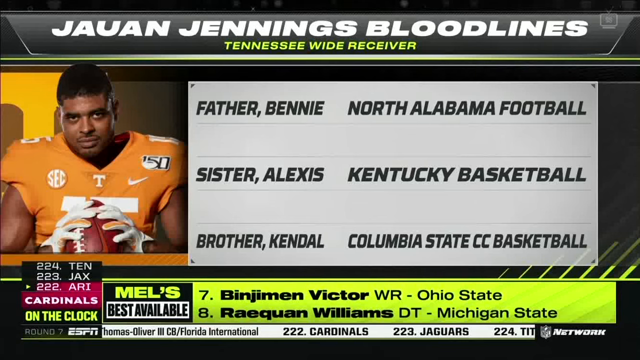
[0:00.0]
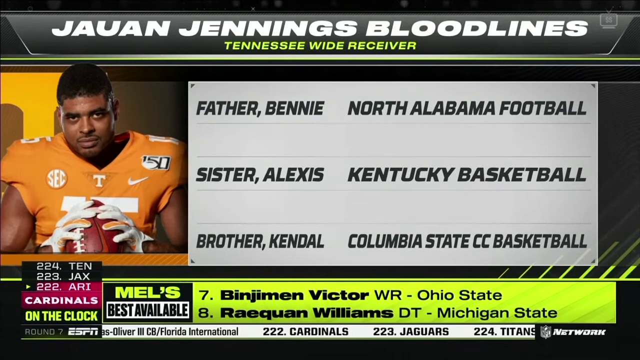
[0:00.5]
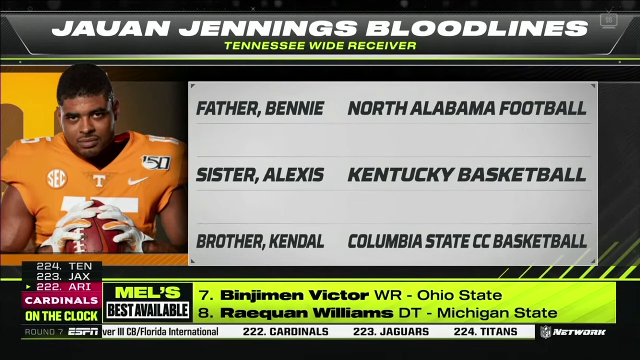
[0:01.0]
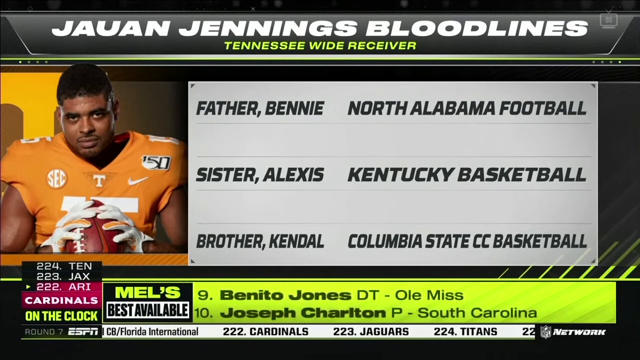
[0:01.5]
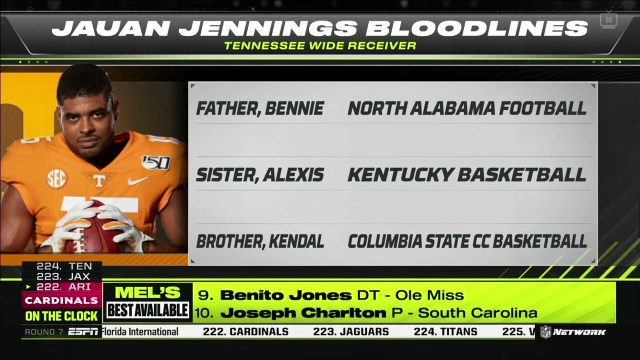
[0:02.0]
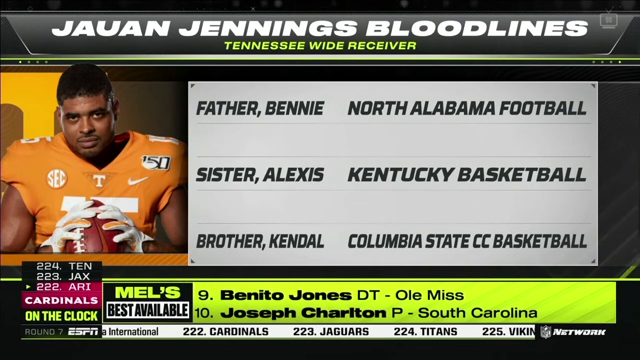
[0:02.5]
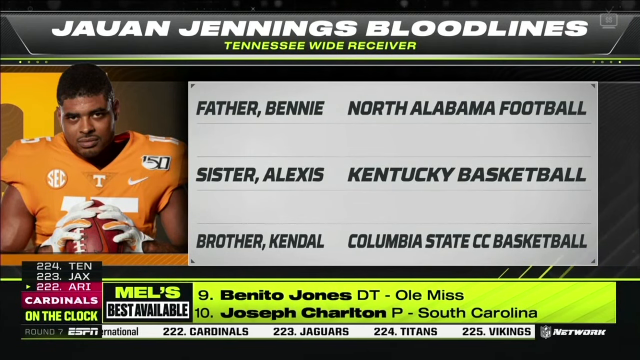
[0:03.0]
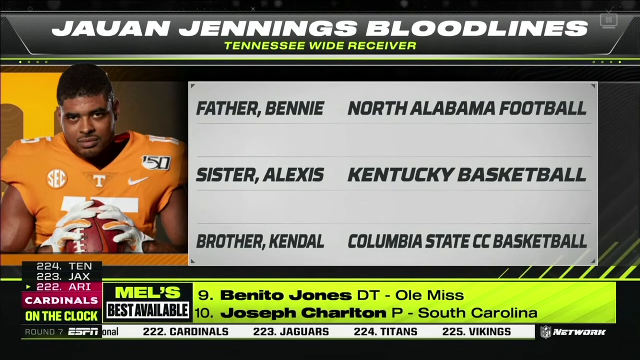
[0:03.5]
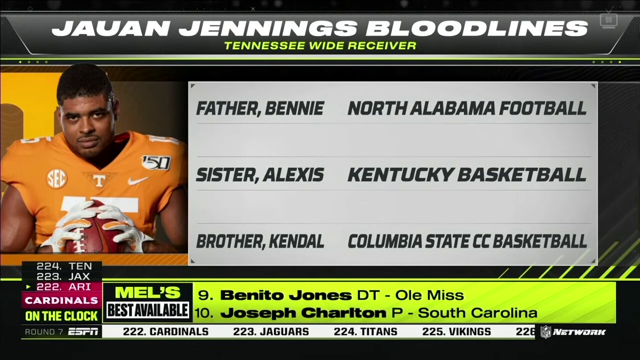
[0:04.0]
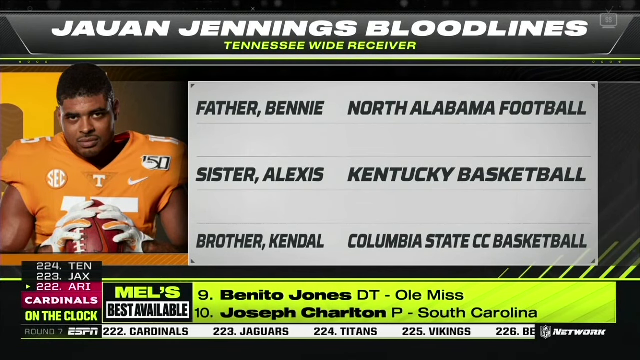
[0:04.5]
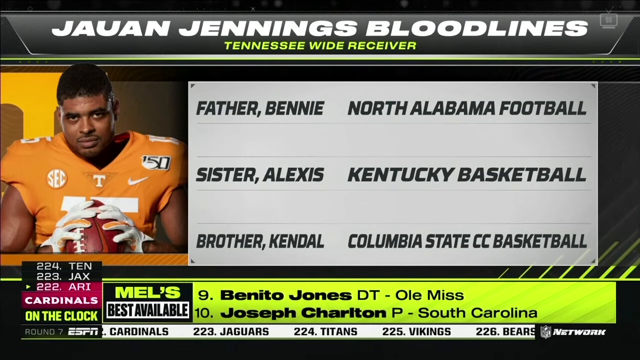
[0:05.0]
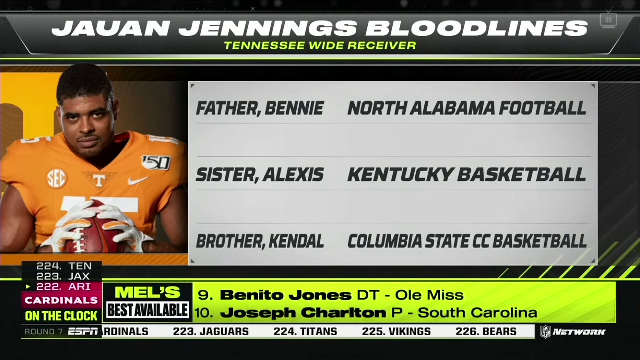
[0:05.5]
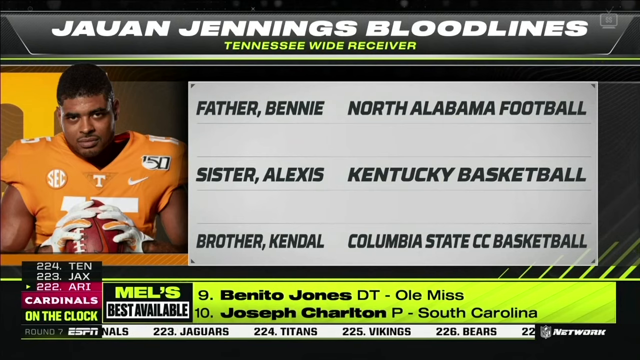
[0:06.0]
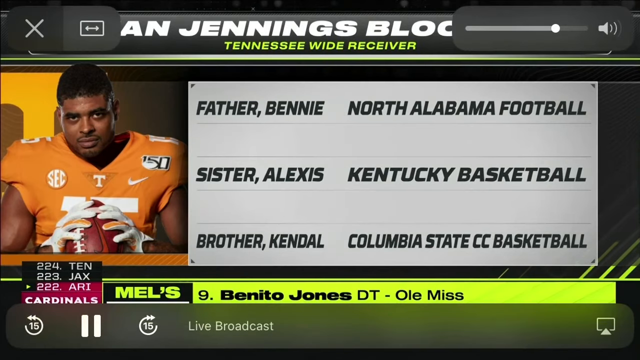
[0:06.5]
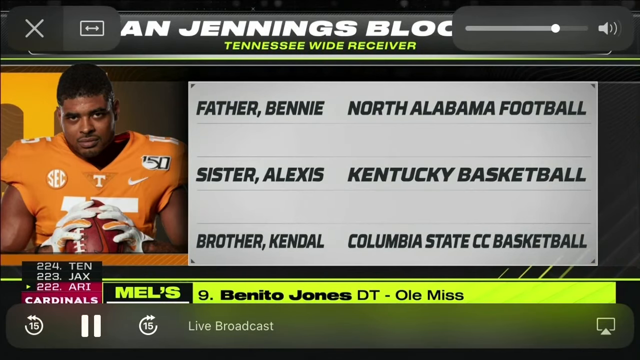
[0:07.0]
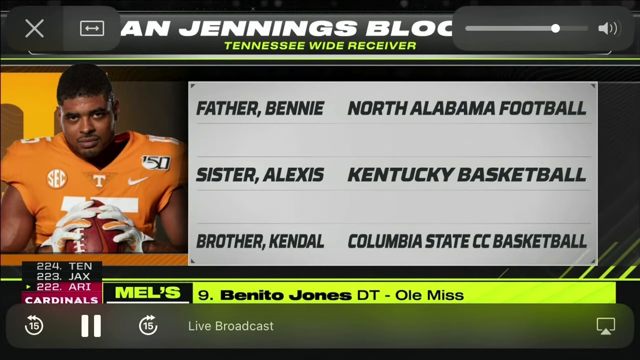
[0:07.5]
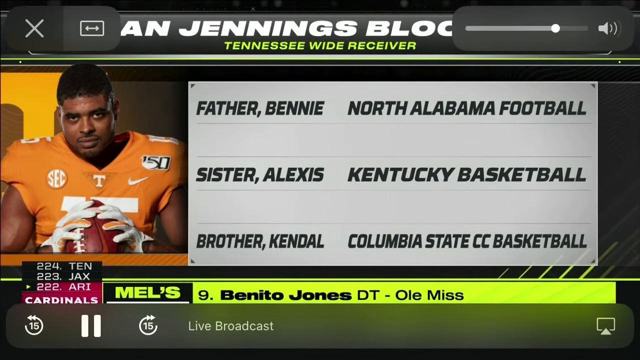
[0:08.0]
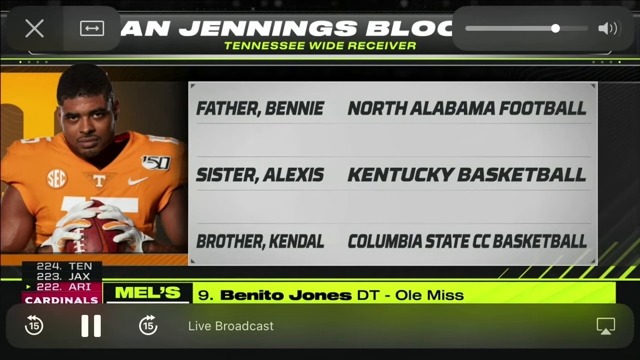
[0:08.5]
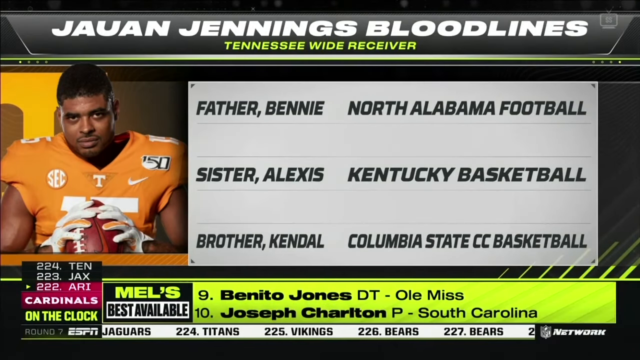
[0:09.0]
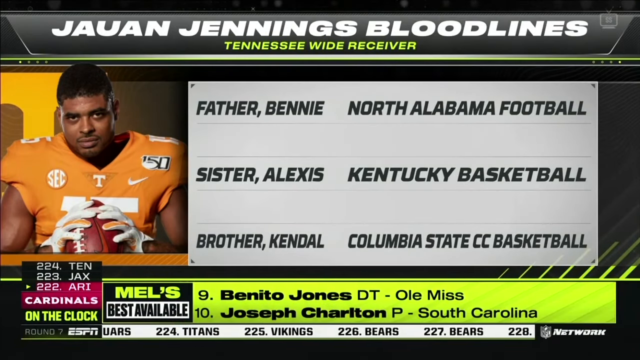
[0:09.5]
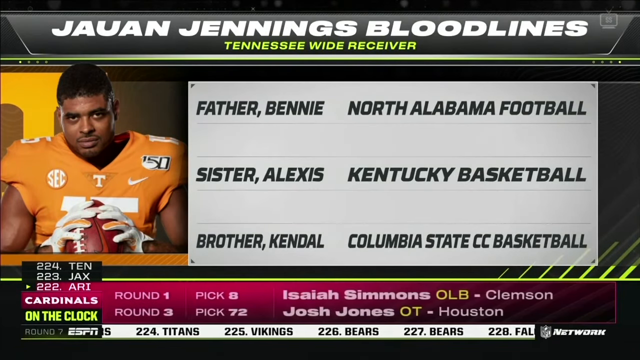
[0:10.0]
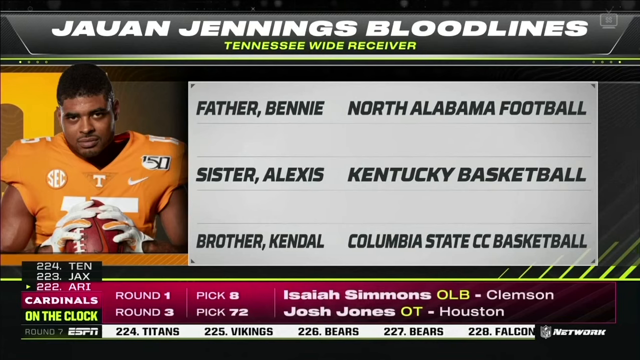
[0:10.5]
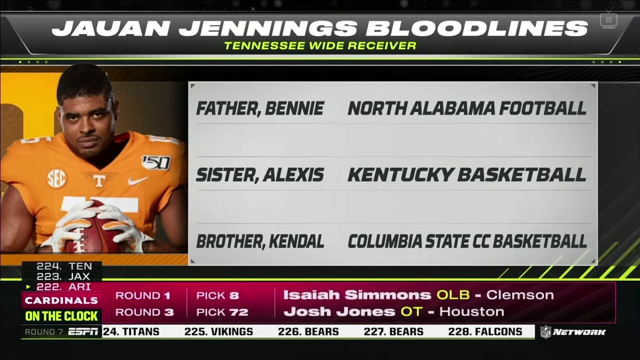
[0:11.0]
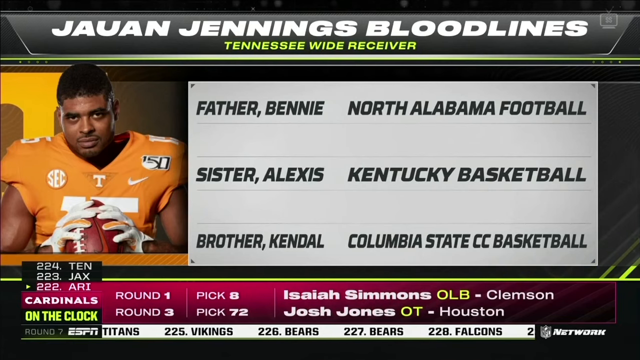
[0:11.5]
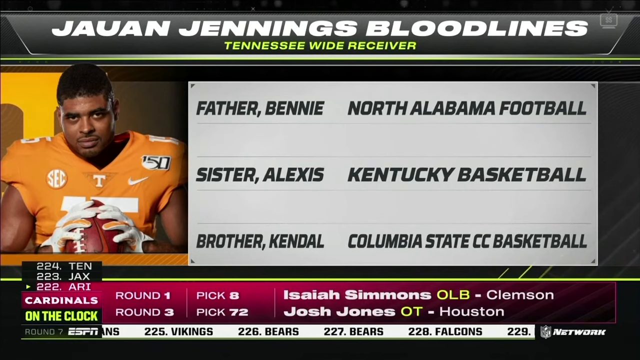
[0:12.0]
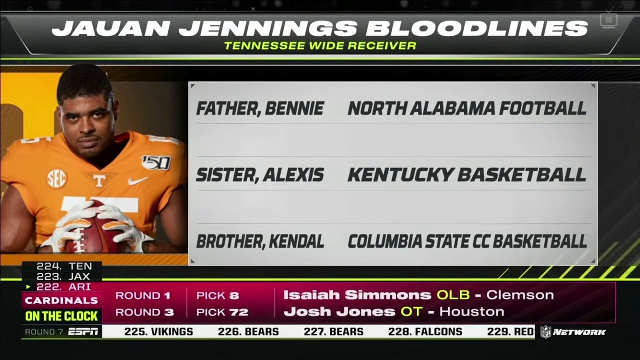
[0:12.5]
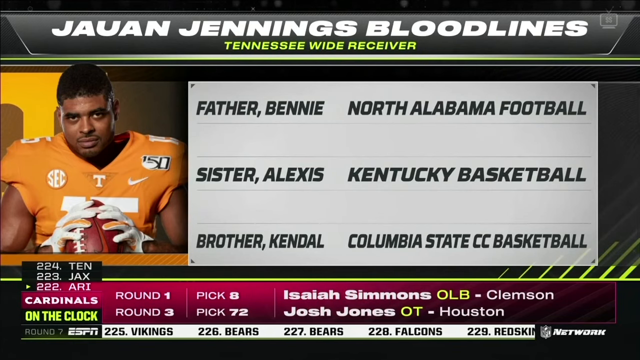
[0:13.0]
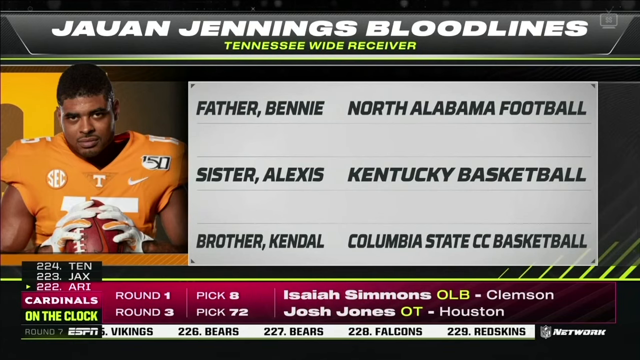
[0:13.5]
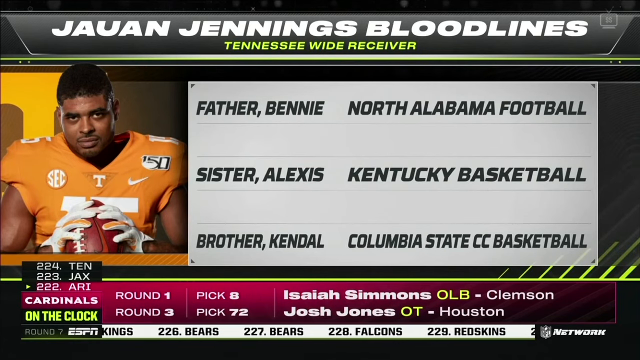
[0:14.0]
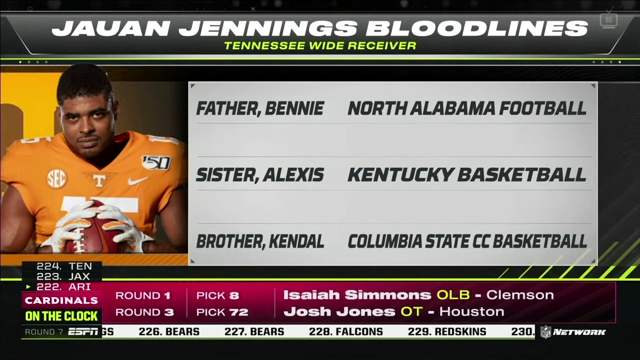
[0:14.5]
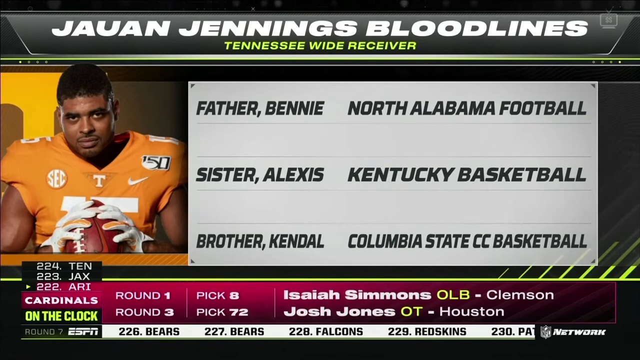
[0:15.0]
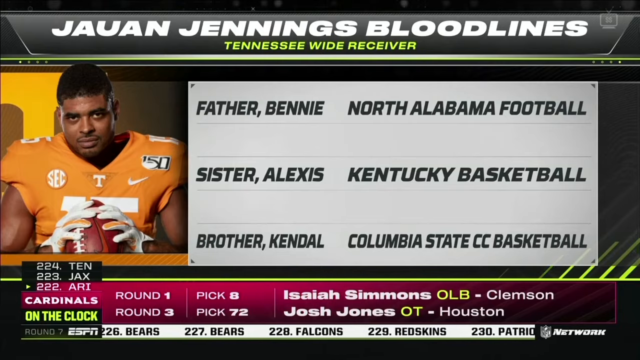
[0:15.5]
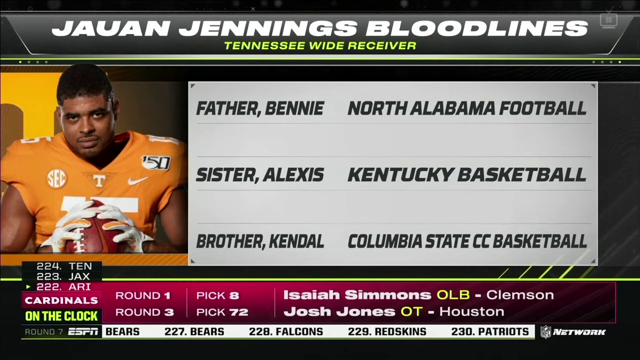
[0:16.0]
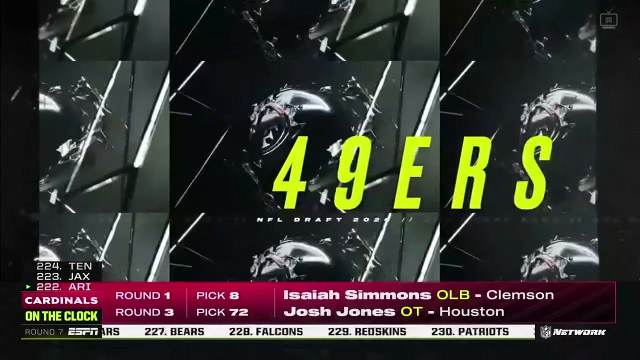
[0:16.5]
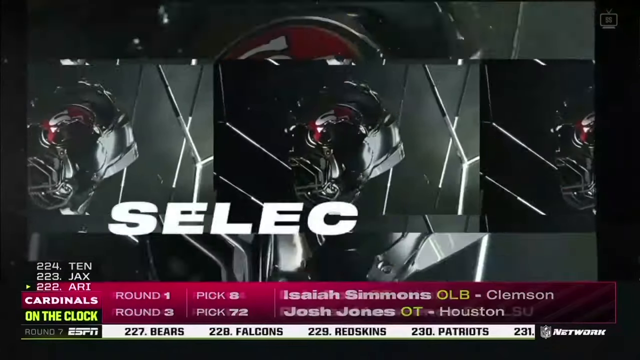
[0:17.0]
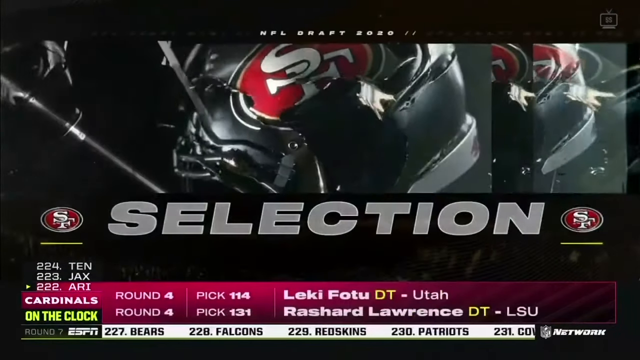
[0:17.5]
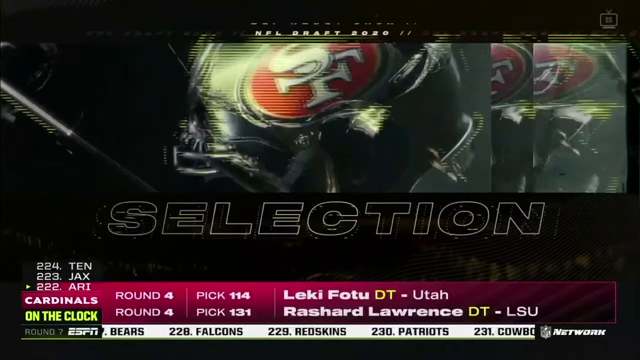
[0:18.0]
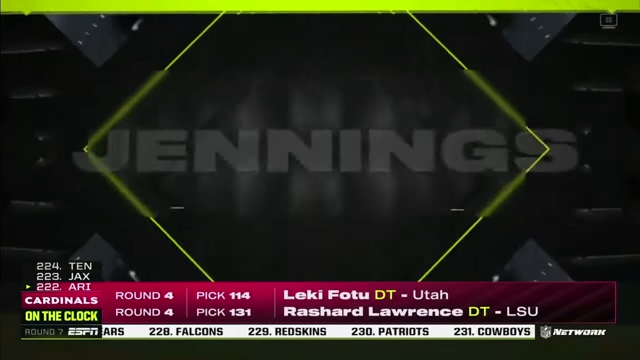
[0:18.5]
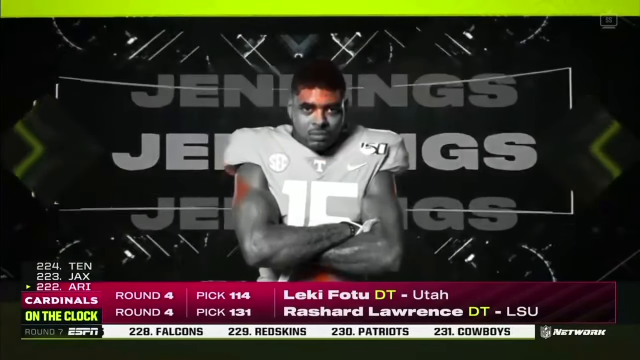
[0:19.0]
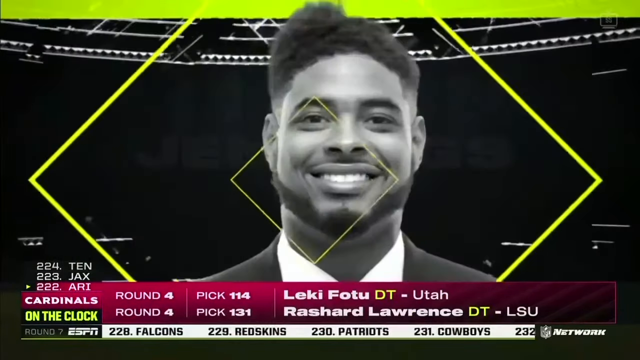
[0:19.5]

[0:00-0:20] A picture of a Tennessee player is shown with text reading "Juwan Jennings Bloodlines" and "Tennessee wide receivers." The text lists his father, Benny, "North Alabama football"; his sister, Alexis, "Kentucky basketball"; and his brother, Kendall, "Columbia State CC basketball." A picture shows him in his football gear, dressed in orange, holding a football and wearing white football gloves. Figures run along the bottom, such as "224.10," "223.jax" and "222.ari," along with "Cardinals." The content possibly relates to the draft: a listing shows number seven, "Benjamin Victor, wide receiver, Ohio State," then a number eight, and a nine pops up at the bottom. The word "Mel's" appears, along with "round one" and "round three." More pictures of Juwan Jennings are shown, with colors flashing behind him.